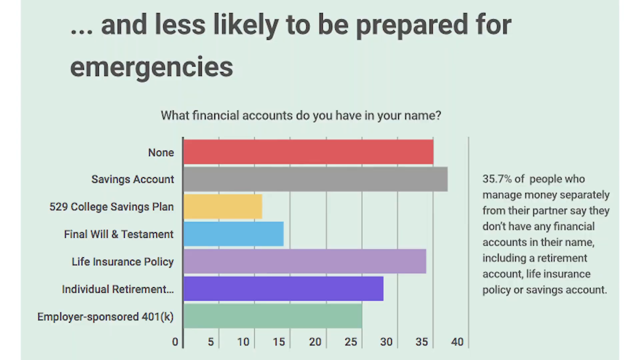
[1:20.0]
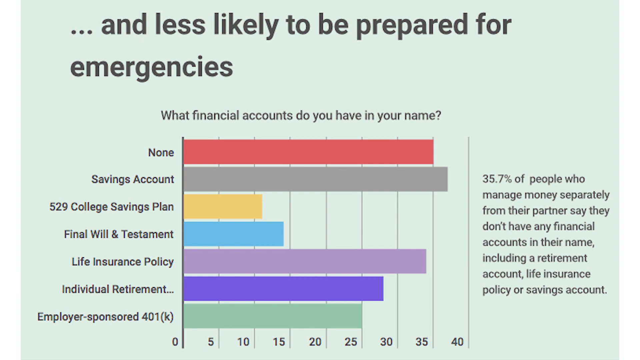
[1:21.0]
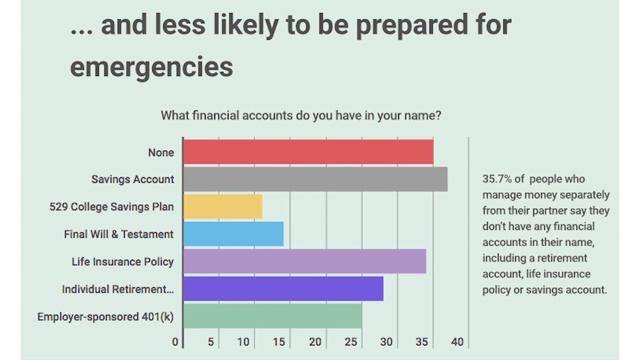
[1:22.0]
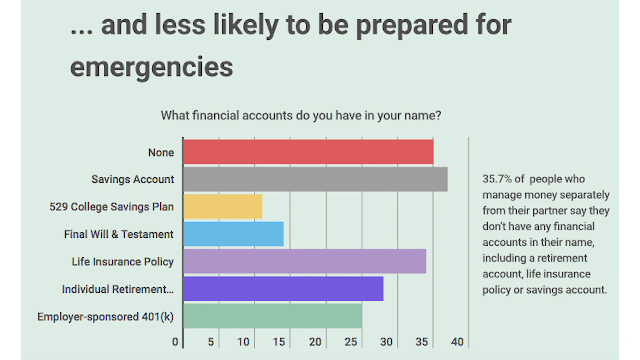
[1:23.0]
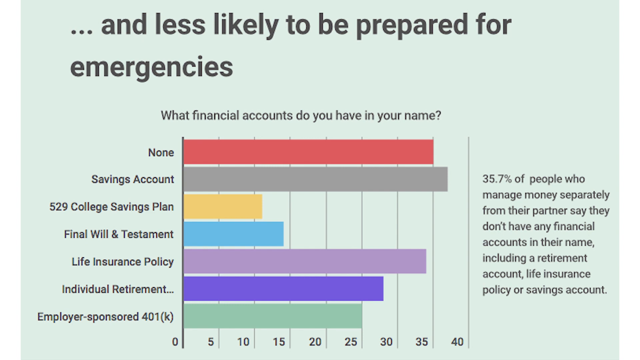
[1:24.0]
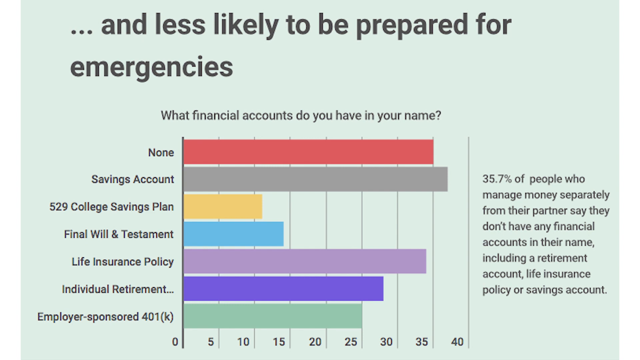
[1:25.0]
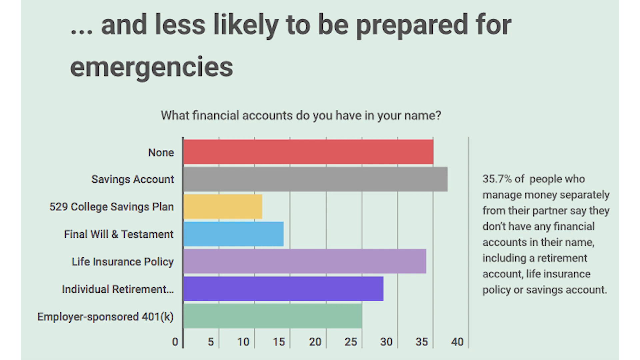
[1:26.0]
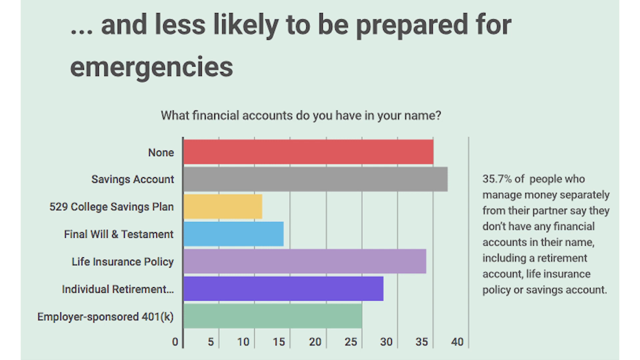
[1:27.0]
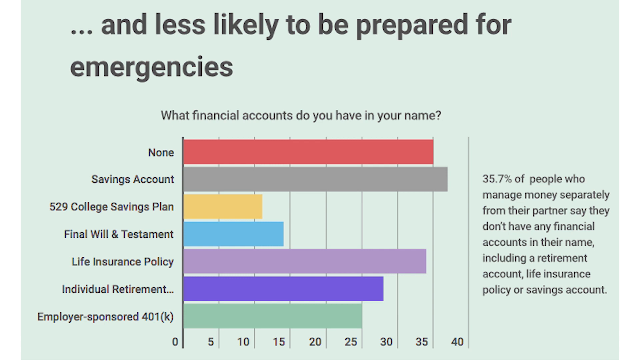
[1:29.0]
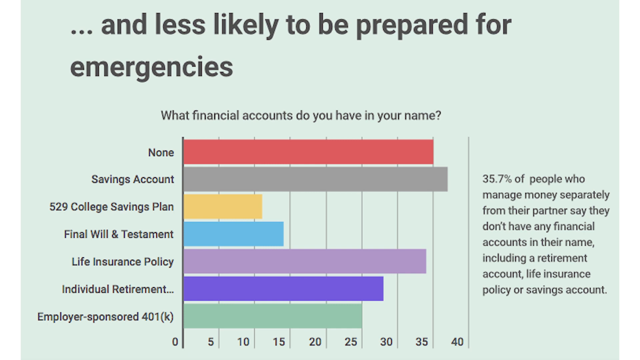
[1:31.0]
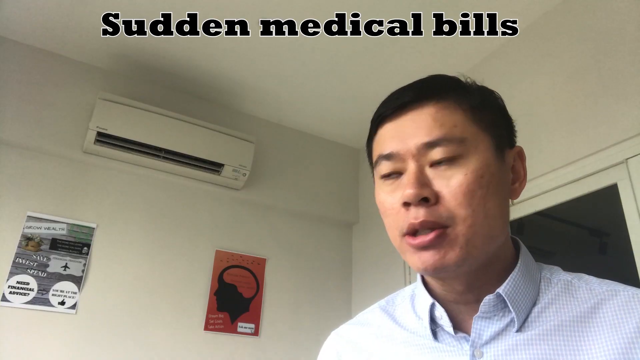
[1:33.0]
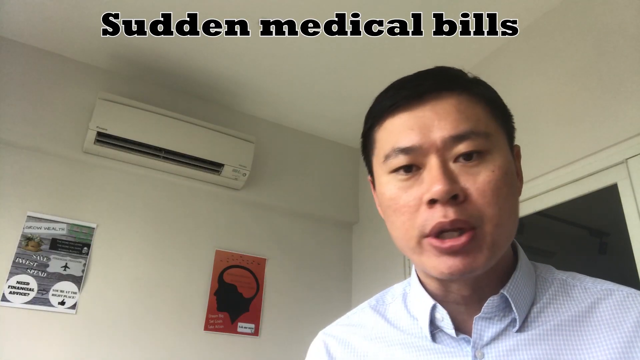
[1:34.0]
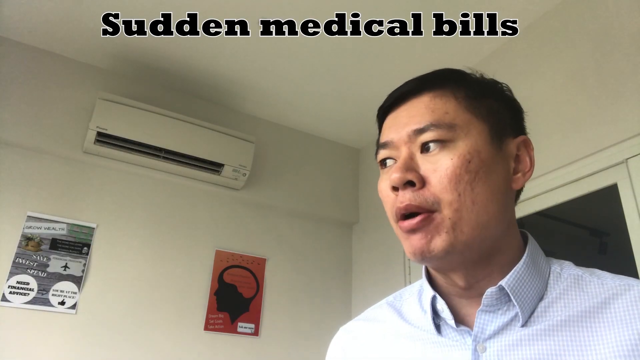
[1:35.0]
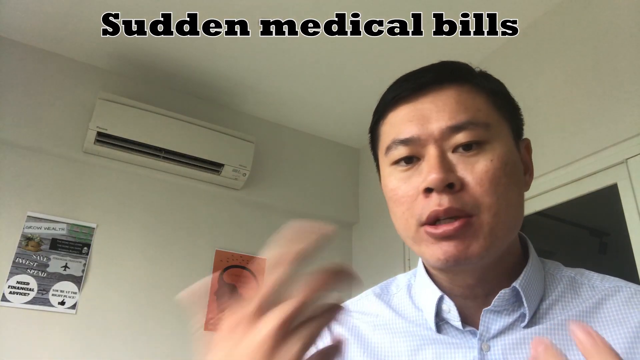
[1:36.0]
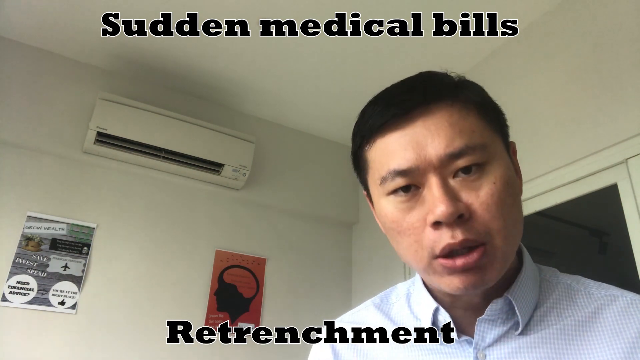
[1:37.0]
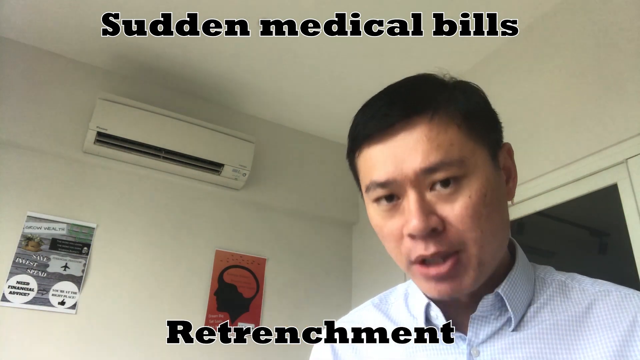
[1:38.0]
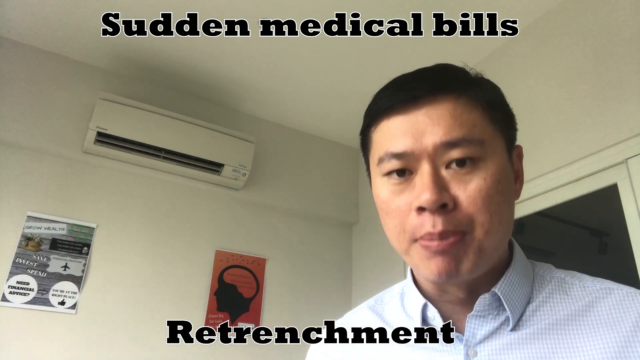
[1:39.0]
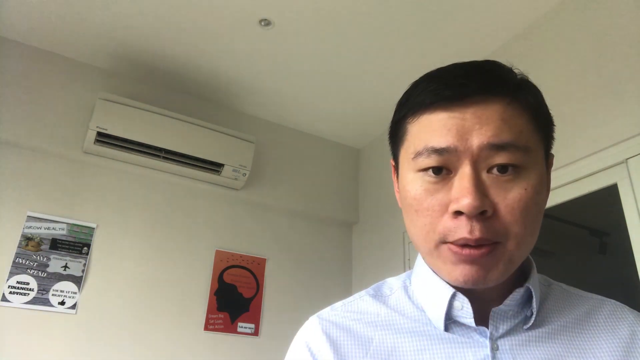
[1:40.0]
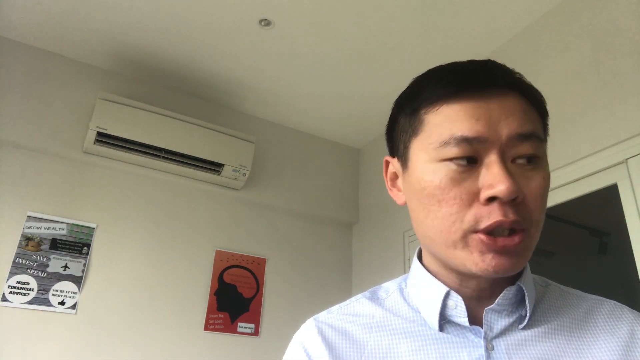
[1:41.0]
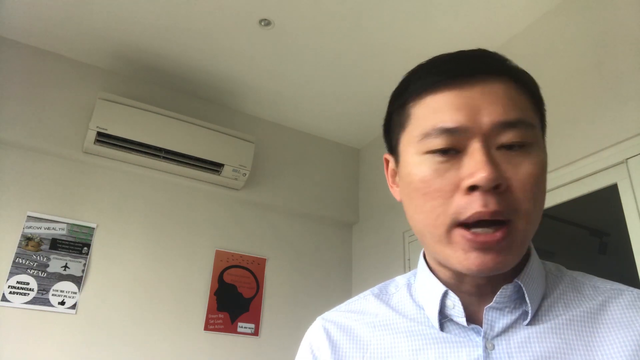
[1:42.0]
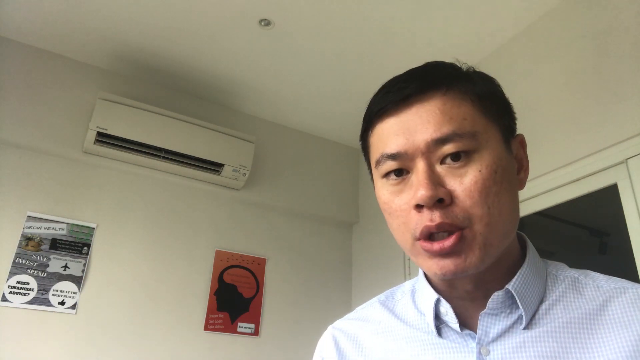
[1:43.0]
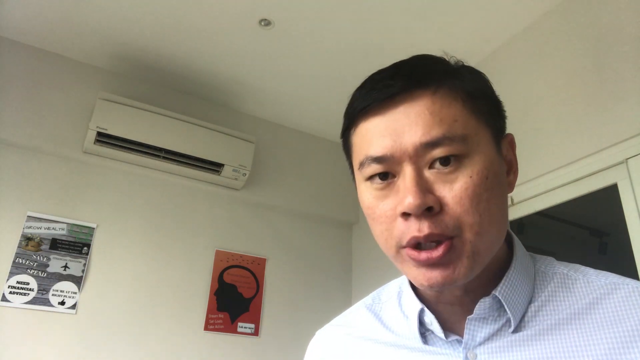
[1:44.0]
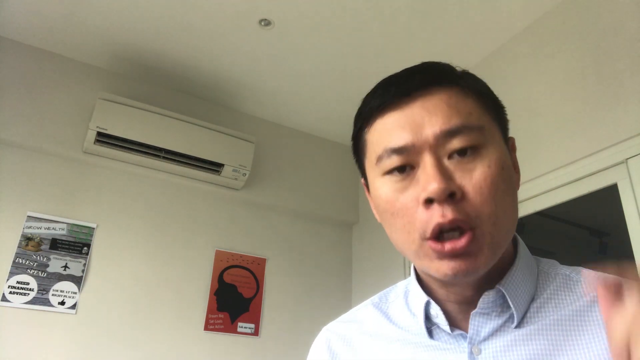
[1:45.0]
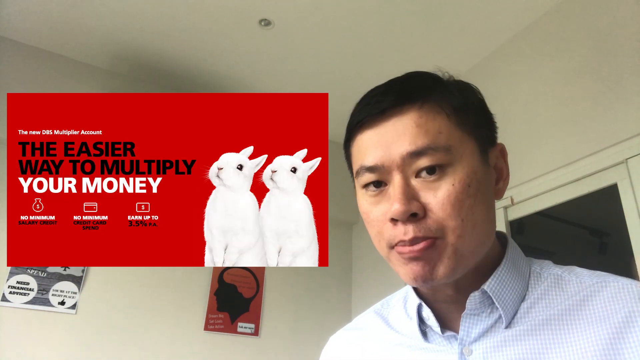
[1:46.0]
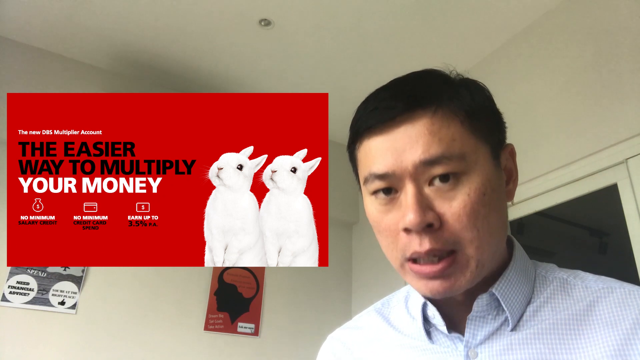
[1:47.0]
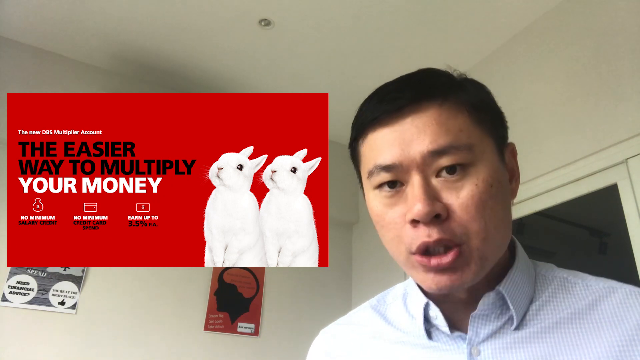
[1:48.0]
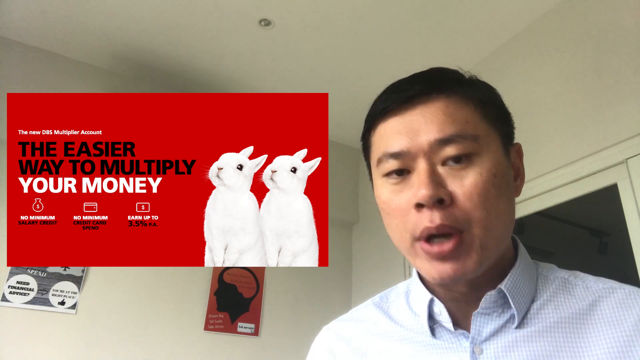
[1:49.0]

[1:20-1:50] A multi-colored horizontal bar chart appears this time. Text reads "less likely to pay for emergencies", and underneath in smaller text is the question "what financial accounts do you have in your name?" On the left are different categories, including a savings account and a few others, in red, gray, yellow, blue and other colors. On the right, text says that 75.7% of people who manage money separately from their partner say they don't have any financial accounts in their name. The background is a light greenish teal color. Along the bottom are five increments where lines cut through the horizontal bars, going up to 40. Text about medical bills then comes up, and at the bottom it says "retrenchment". The man kind of looks over to the side, holds up his right hand for a moment, points for a second, is animated, kind of nods to the viewer and points again. A red box then appears with really small text about the new DBS multiplier account, with what looks like two rabbits kind of looking up. It says "the easier way to multiply your money", with "money" in white and the rest in black. There is a money bag with "no minimum", a credit card with "no minimum", and a dollar sign with "earn up to".